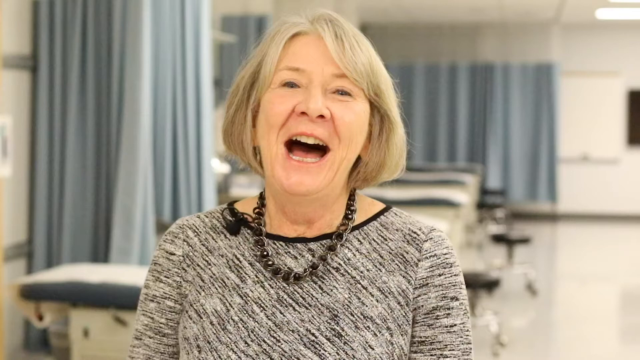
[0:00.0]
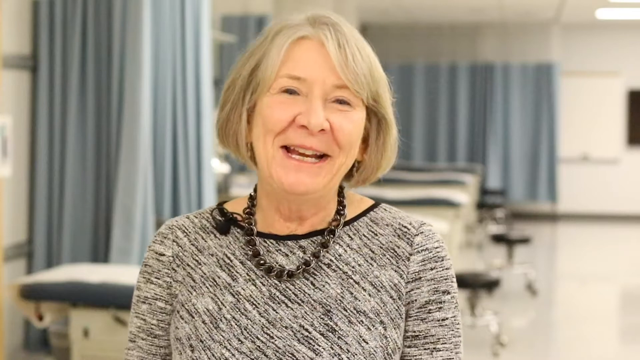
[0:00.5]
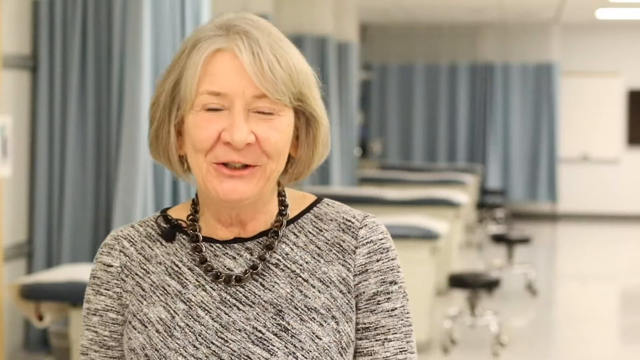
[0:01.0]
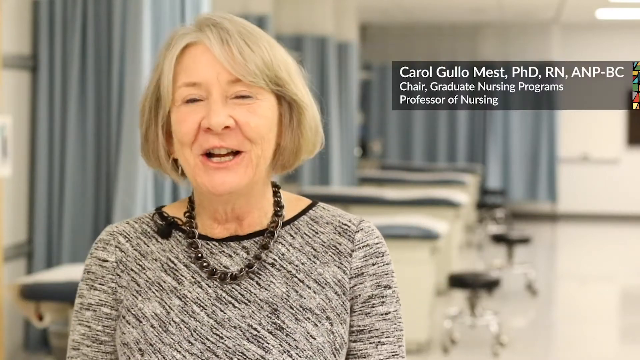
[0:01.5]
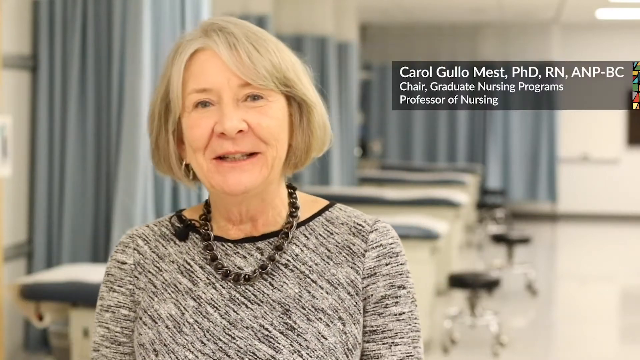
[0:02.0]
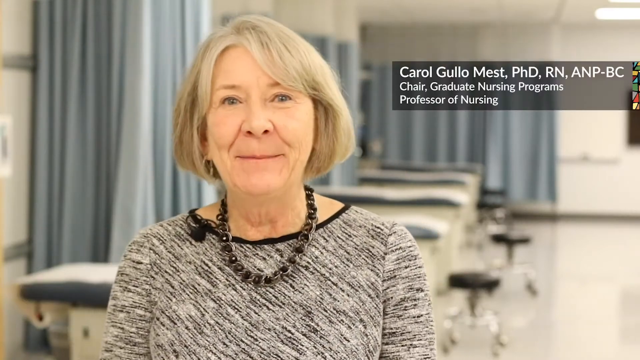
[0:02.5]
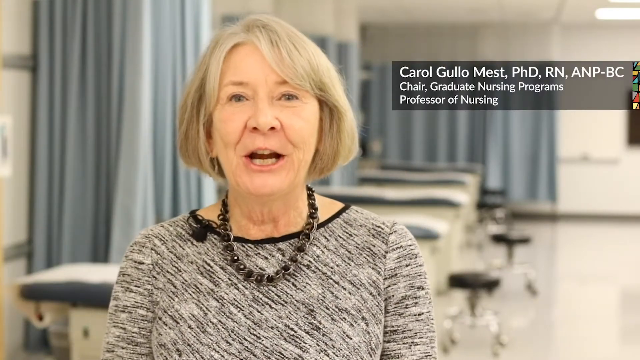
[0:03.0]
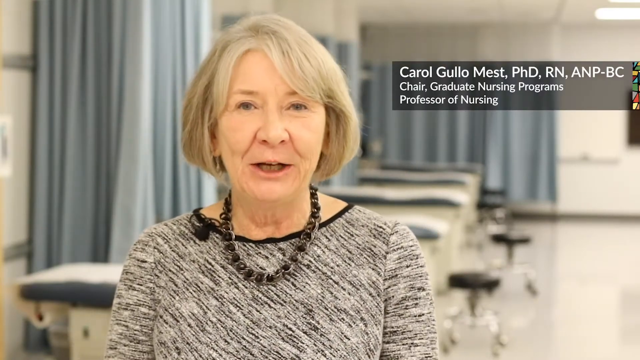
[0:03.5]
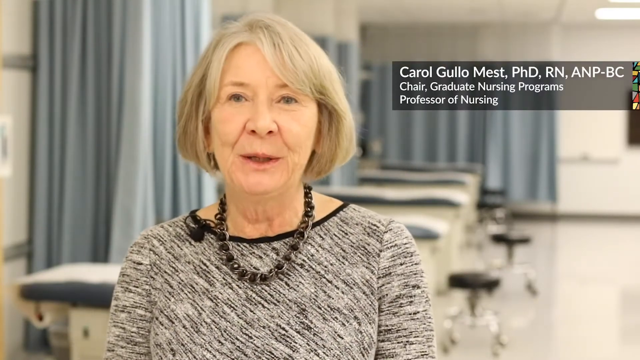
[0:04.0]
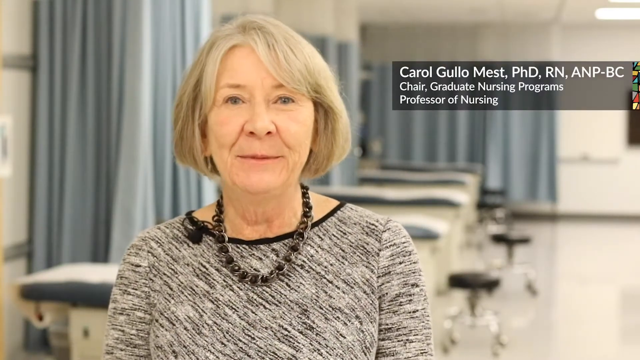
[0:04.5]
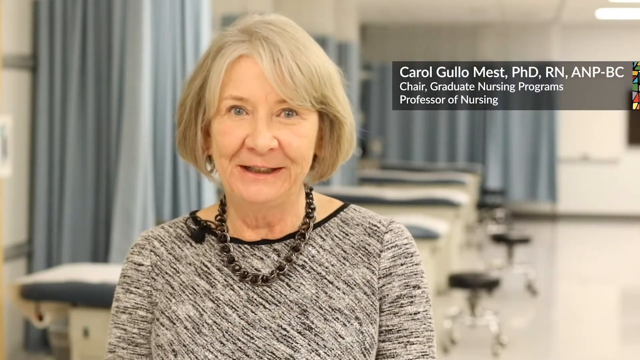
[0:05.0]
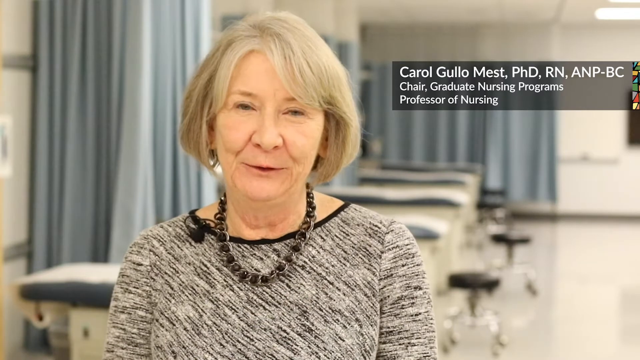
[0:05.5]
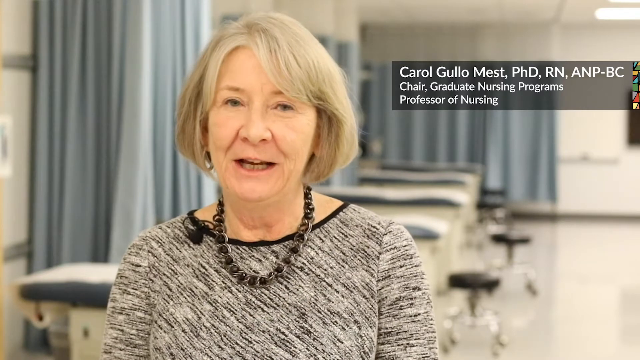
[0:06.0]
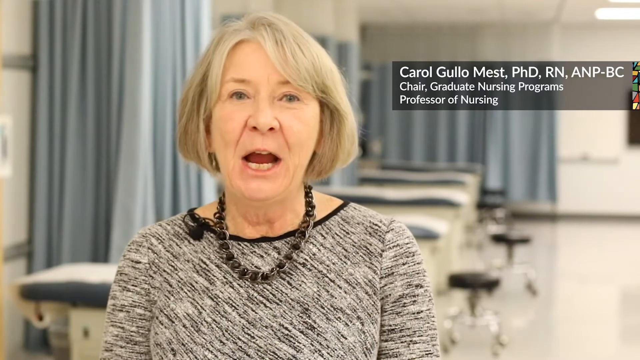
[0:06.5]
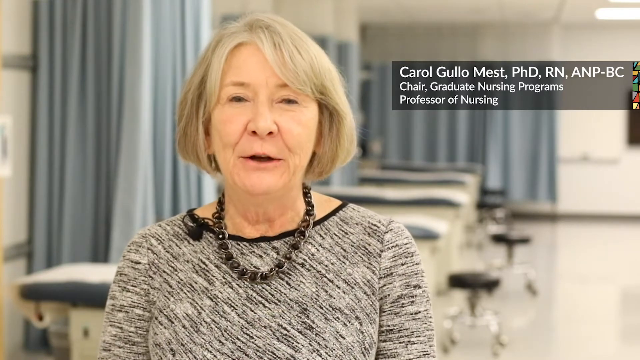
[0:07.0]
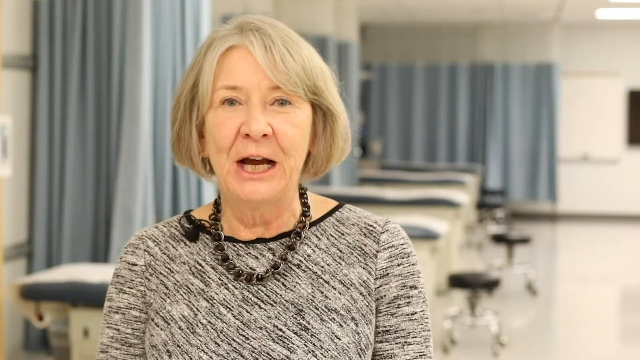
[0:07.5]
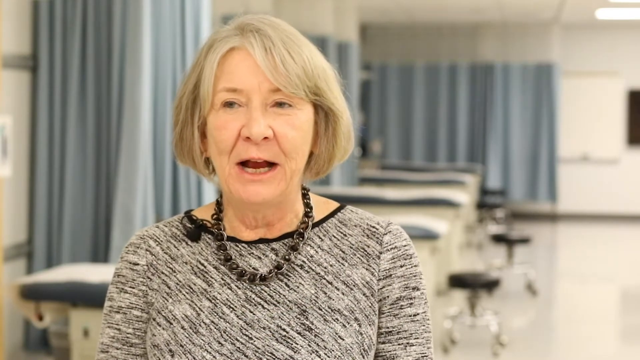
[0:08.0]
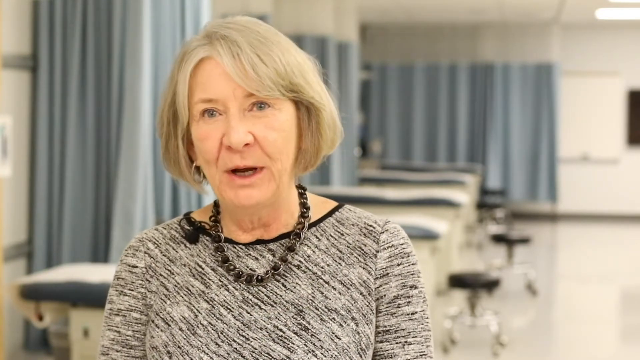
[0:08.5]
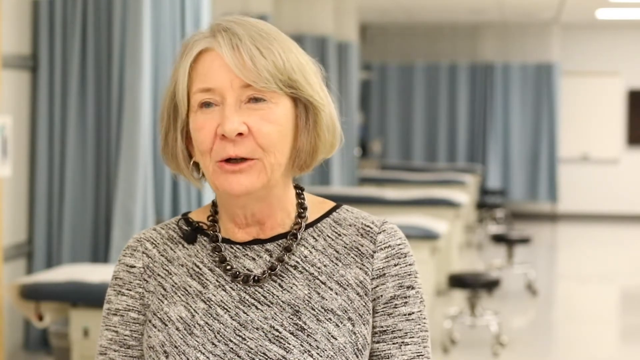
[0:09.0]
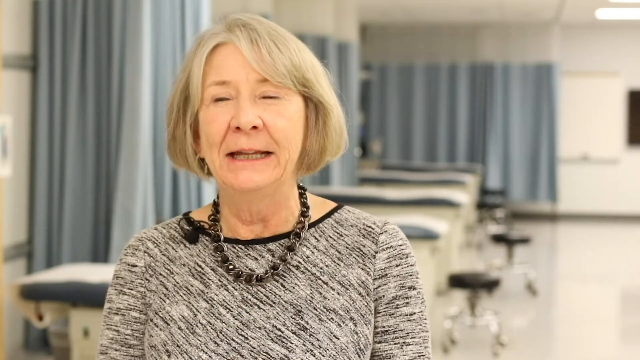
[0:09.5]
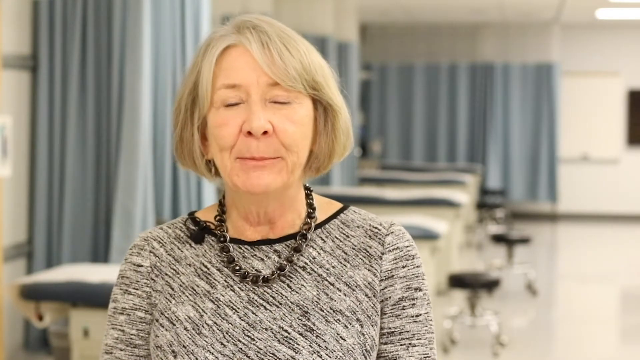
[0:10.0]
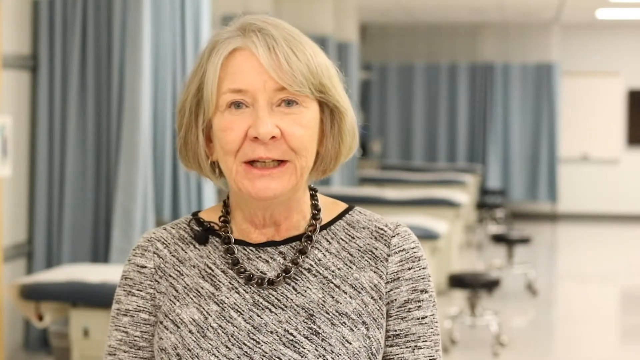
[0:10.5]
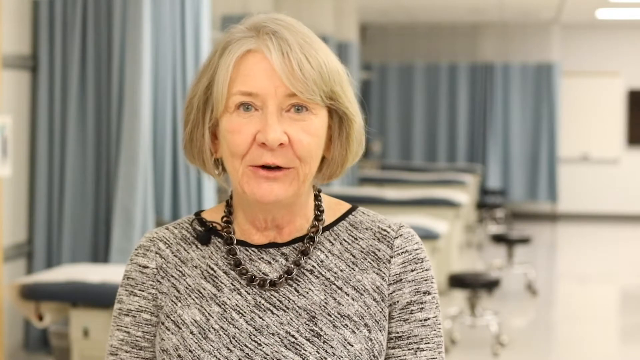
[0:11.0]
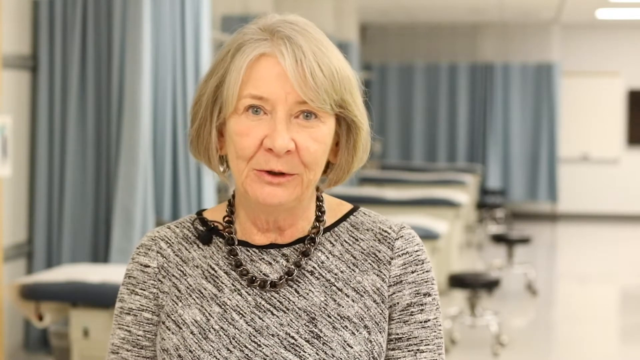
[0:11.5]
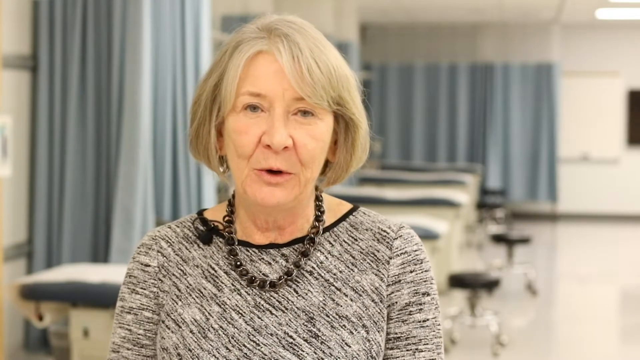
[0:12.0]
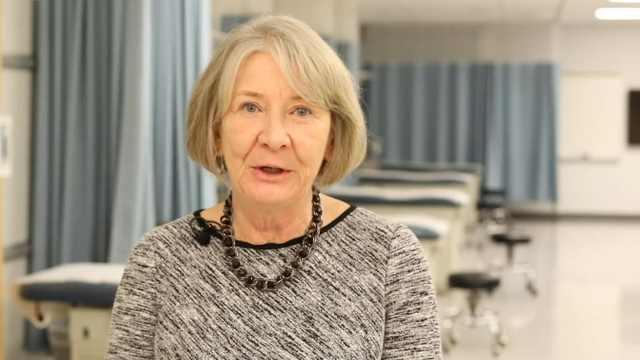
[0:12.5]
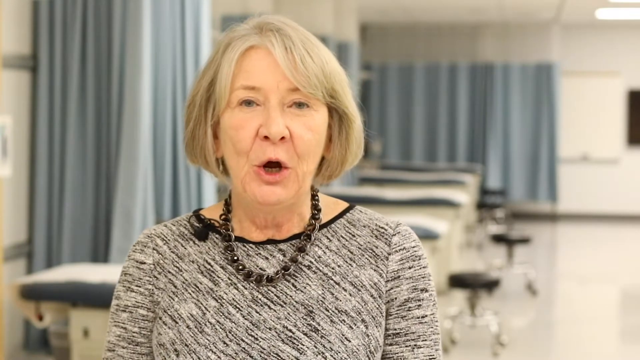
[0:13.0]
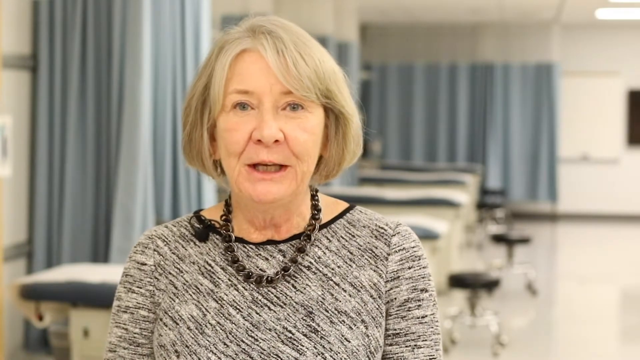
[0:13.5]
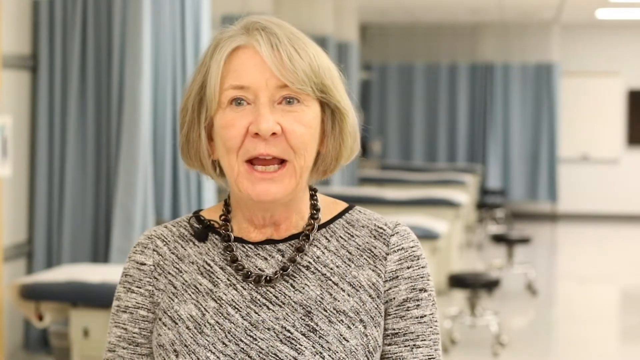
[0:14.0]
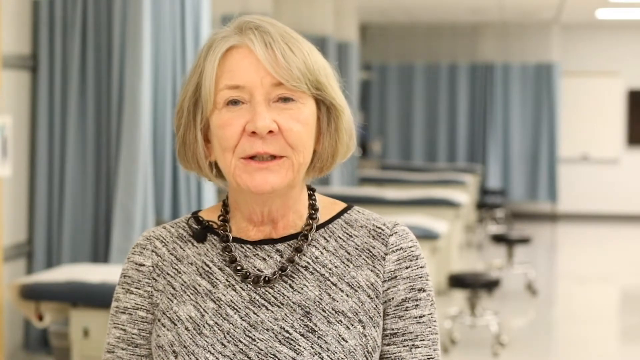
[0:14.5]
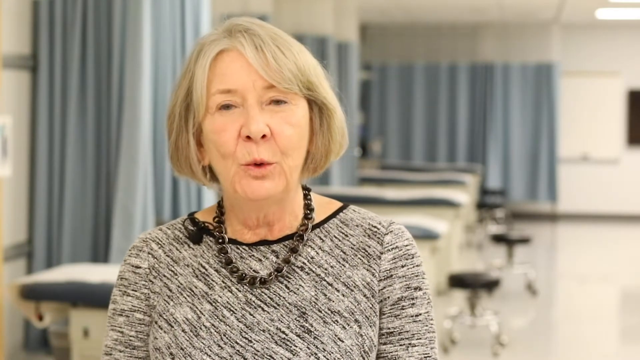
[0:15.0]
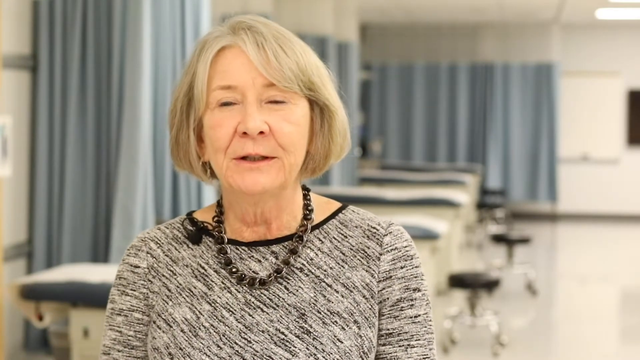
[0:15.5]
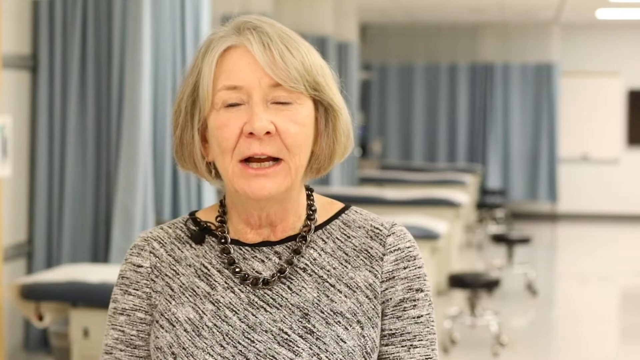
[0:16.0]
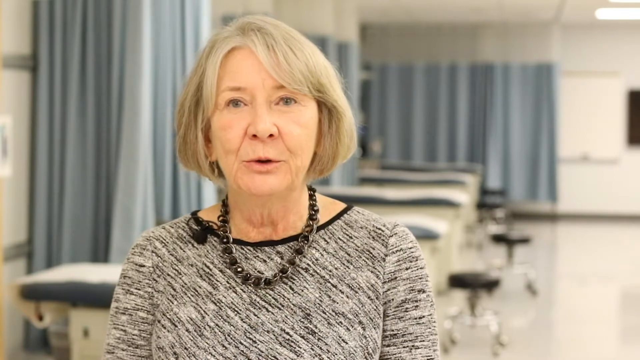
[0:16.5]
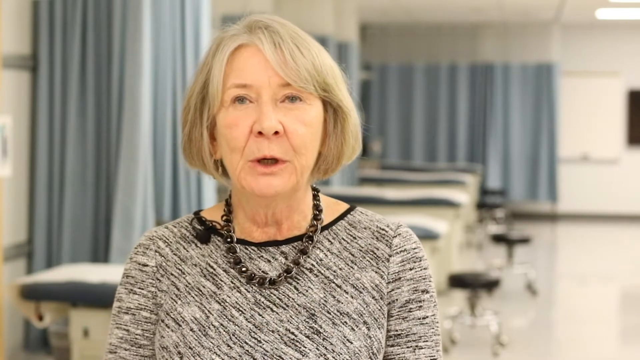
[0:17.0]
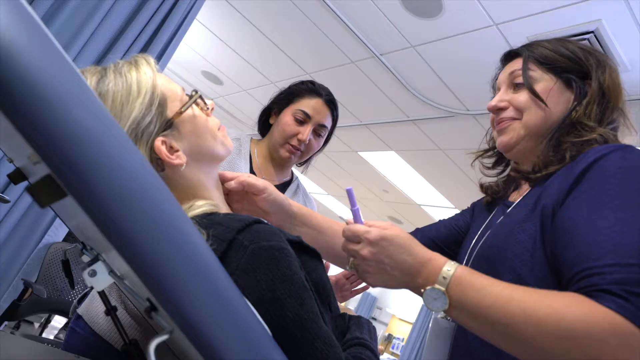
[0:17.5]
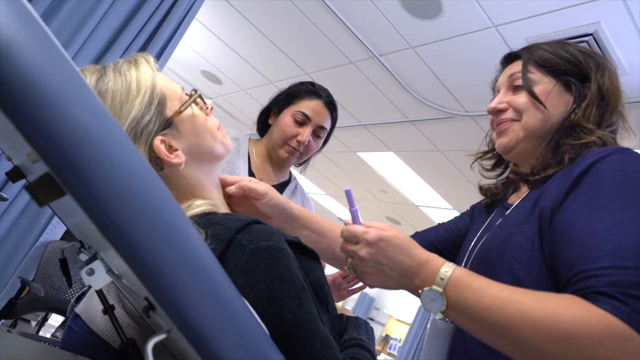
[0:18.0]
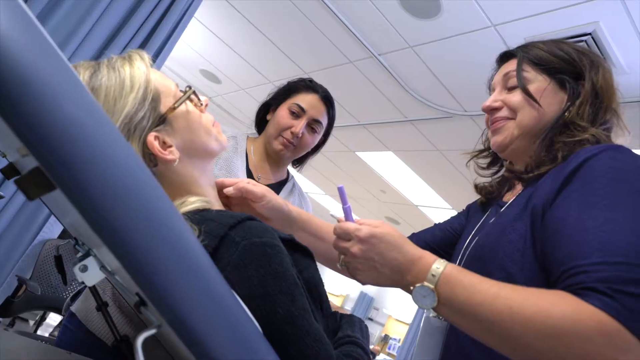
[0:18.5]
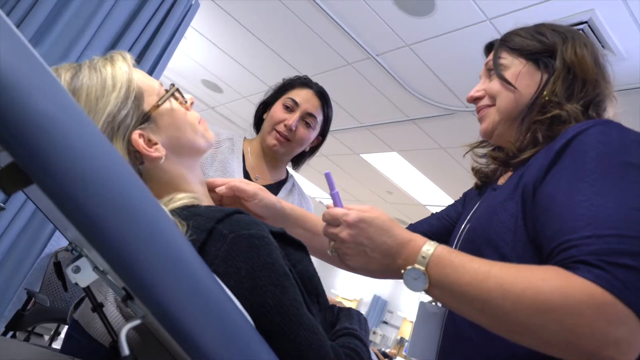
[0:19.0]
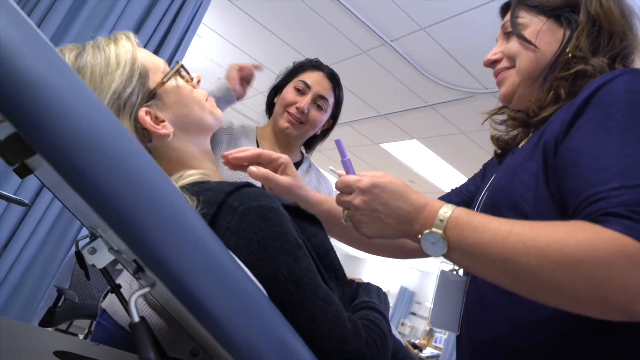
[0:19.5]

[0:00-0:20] An older woman with light-colored, mid-length hair and white skin, wearing a black necklace, speaks to the camera. Her name, Carol Gullo Mest, is given along with her title as a Ph.D. registered nurse; the screen then says "Chair Graduate Nursing Programs" and "professor of nursing". She is in what is kind of a hospital or doctor-like setting, with blue curtains, seats and tables for patients behind her. Next, a patient sits on one of the tables while two nurses treat them; one nurse wears a dark blue scrub outfit, and they sort of just speak with the patient. The place appears to be a doctor's office or clinic.